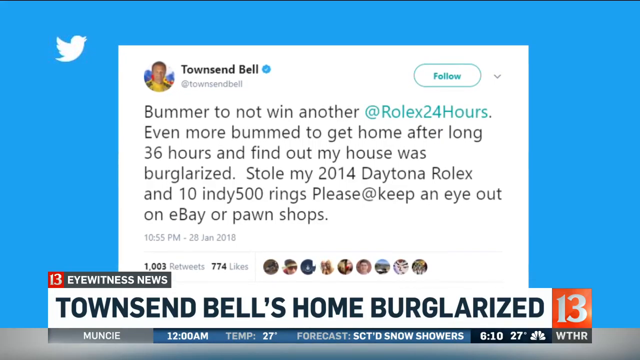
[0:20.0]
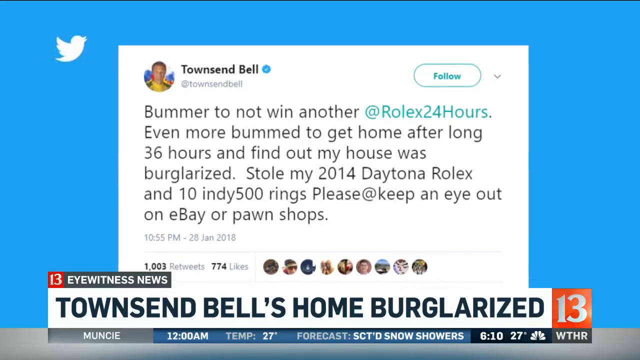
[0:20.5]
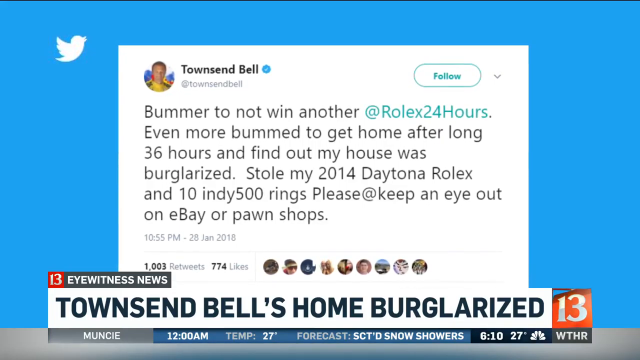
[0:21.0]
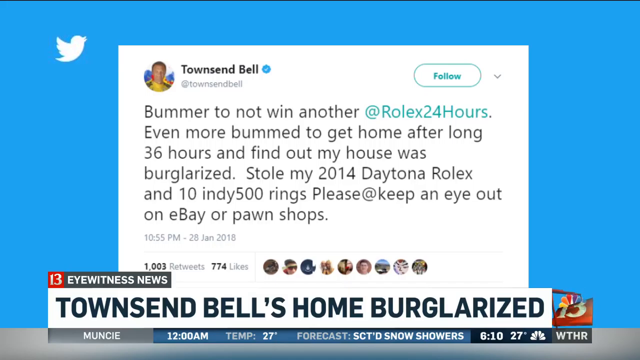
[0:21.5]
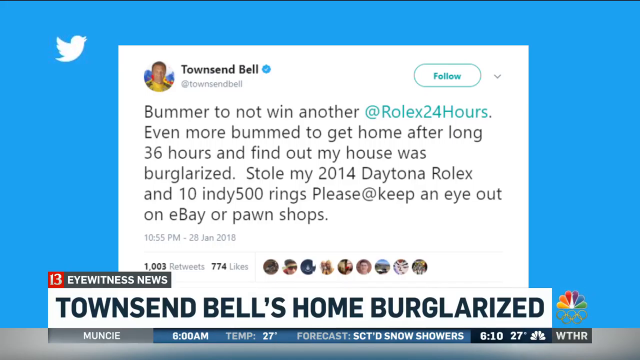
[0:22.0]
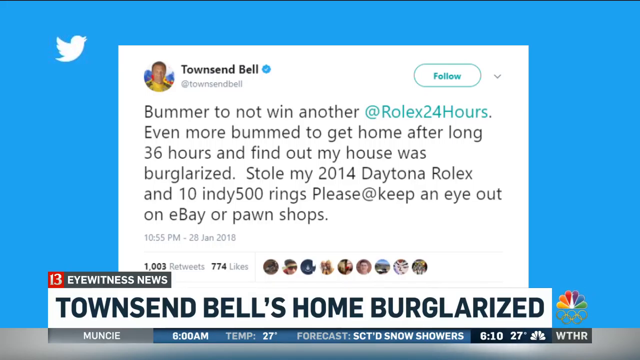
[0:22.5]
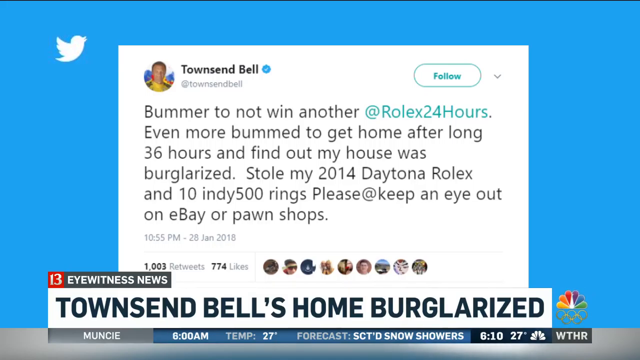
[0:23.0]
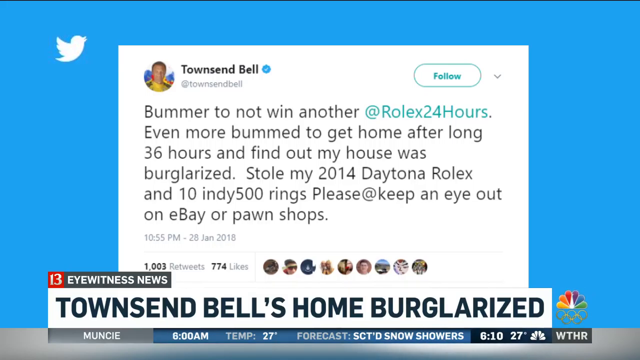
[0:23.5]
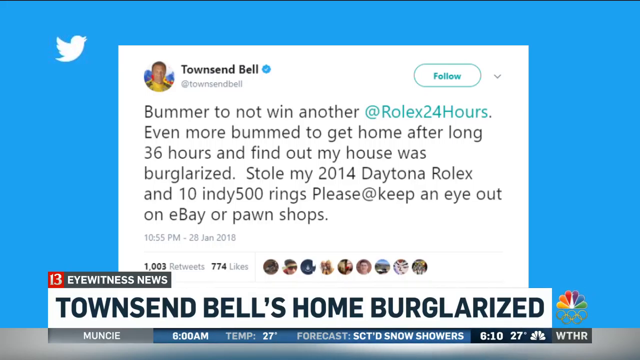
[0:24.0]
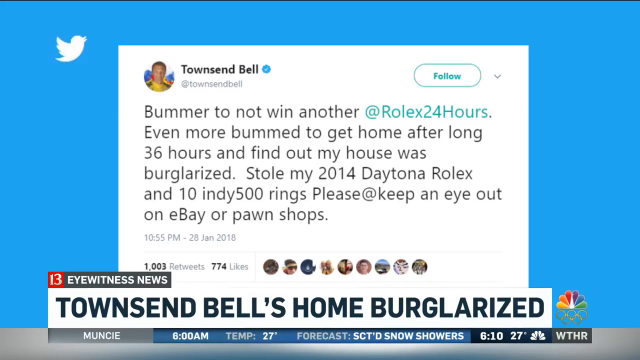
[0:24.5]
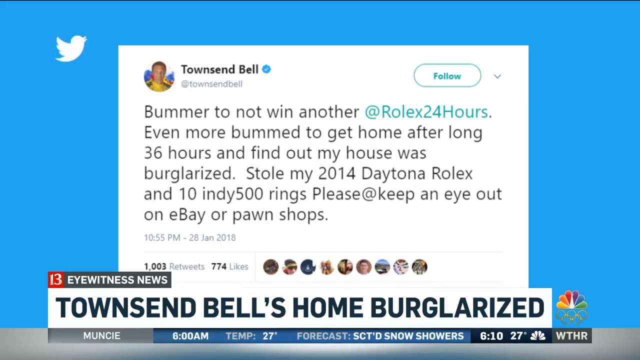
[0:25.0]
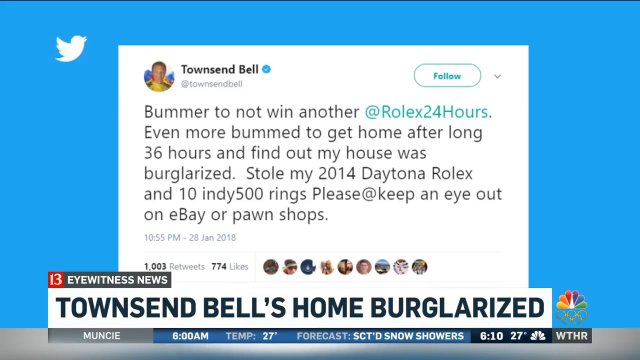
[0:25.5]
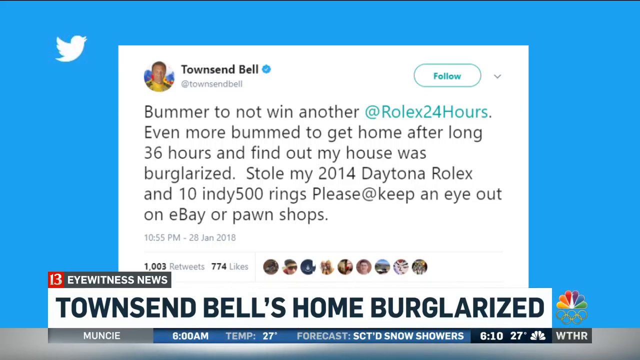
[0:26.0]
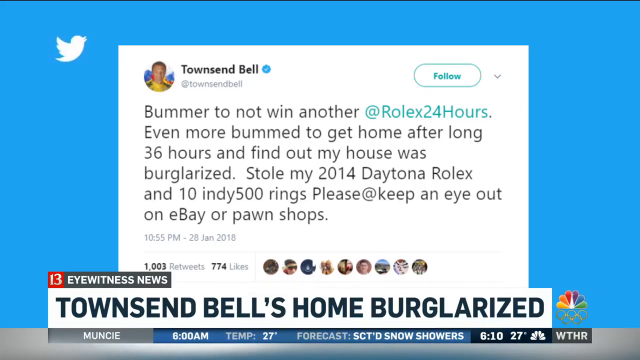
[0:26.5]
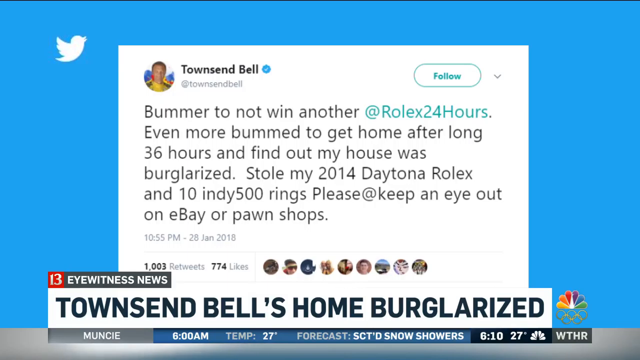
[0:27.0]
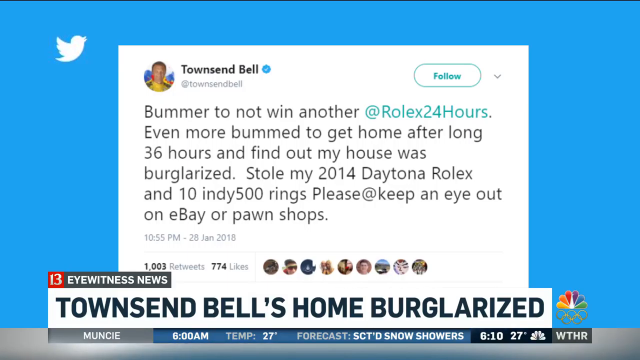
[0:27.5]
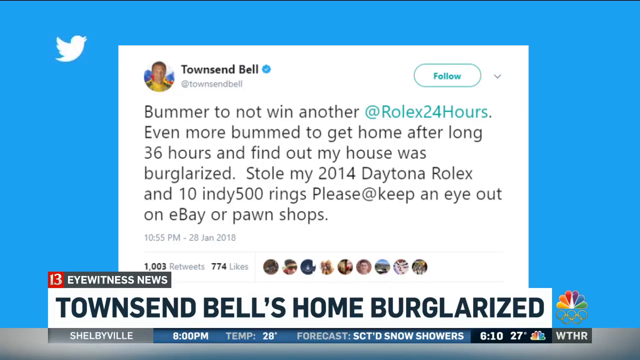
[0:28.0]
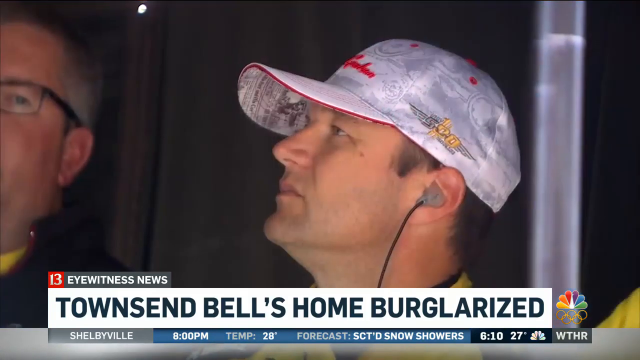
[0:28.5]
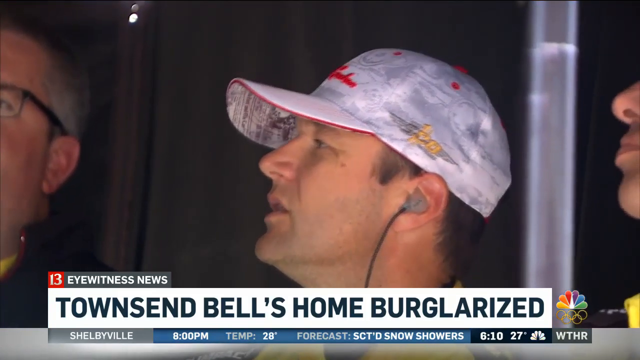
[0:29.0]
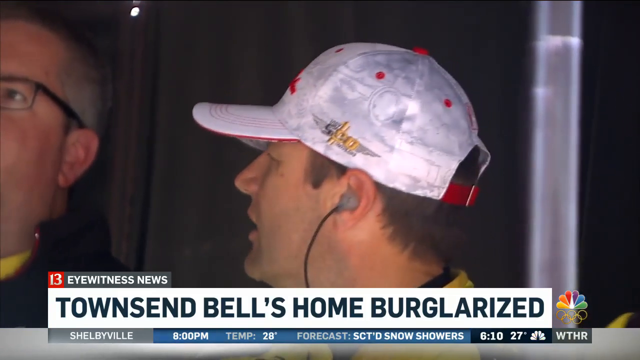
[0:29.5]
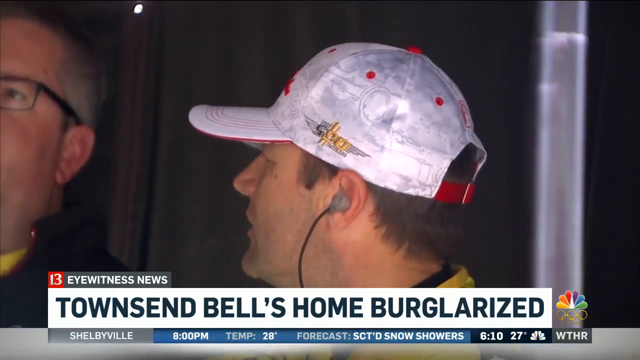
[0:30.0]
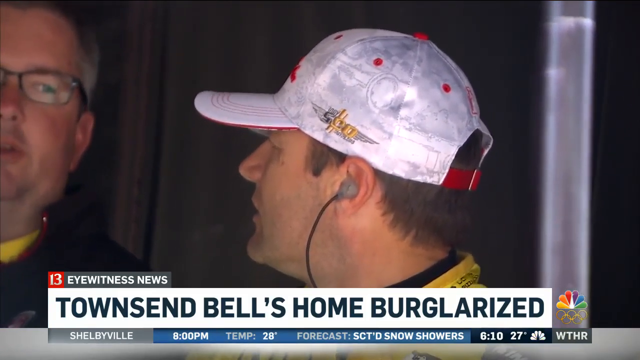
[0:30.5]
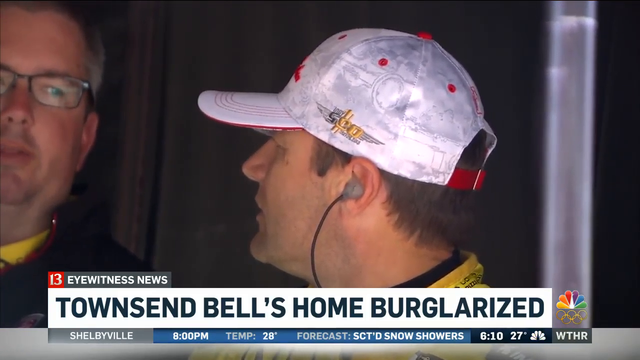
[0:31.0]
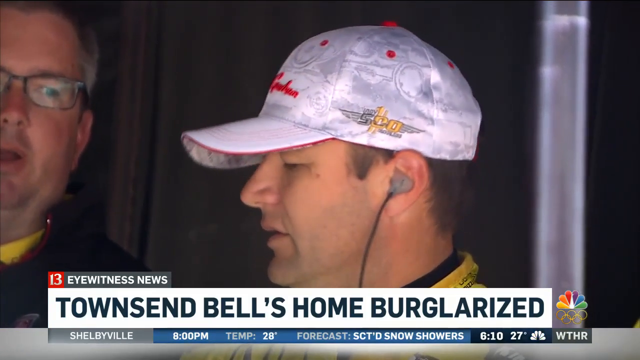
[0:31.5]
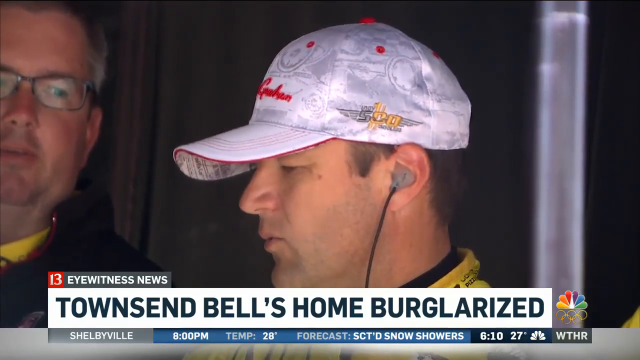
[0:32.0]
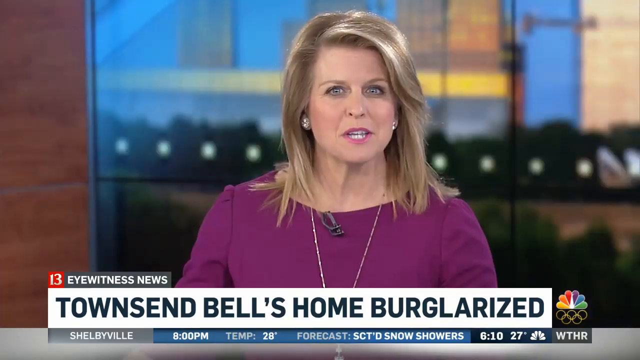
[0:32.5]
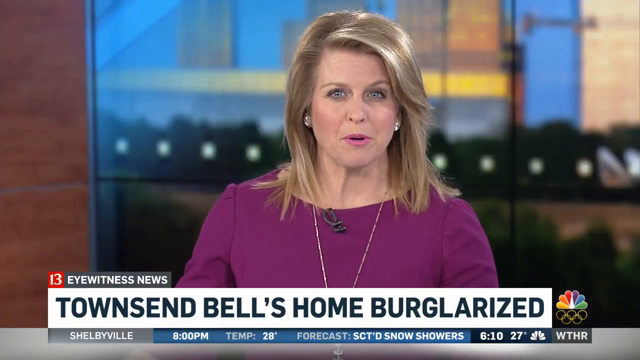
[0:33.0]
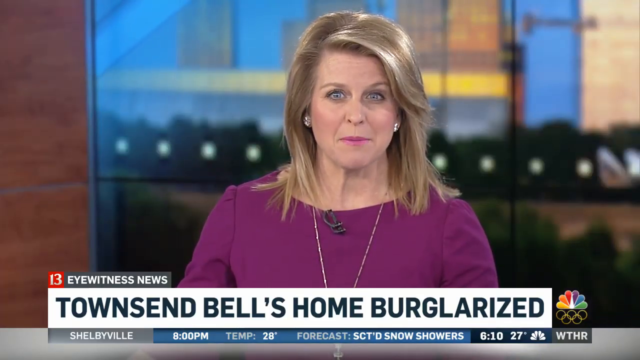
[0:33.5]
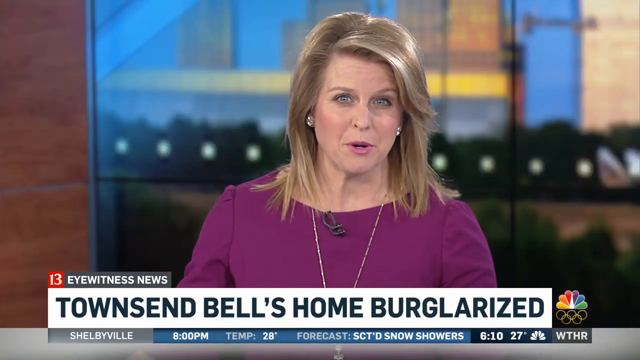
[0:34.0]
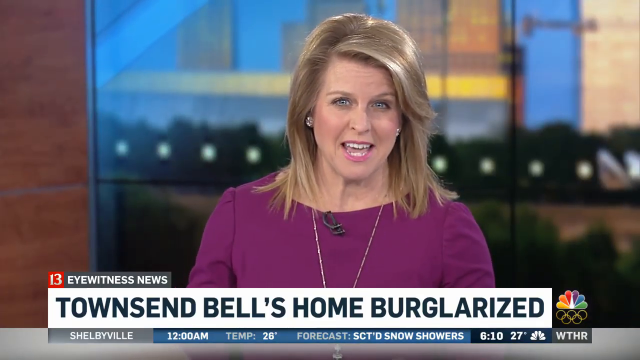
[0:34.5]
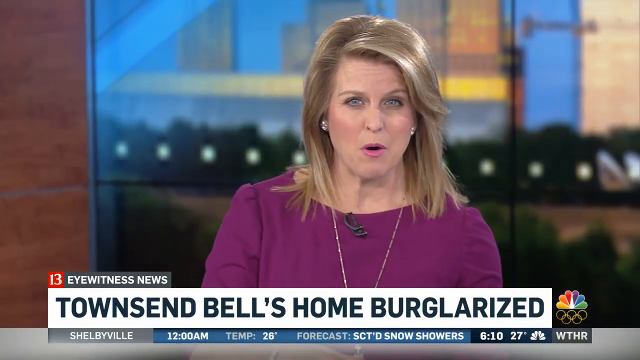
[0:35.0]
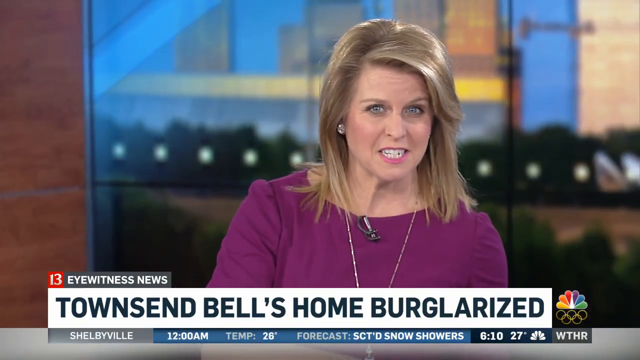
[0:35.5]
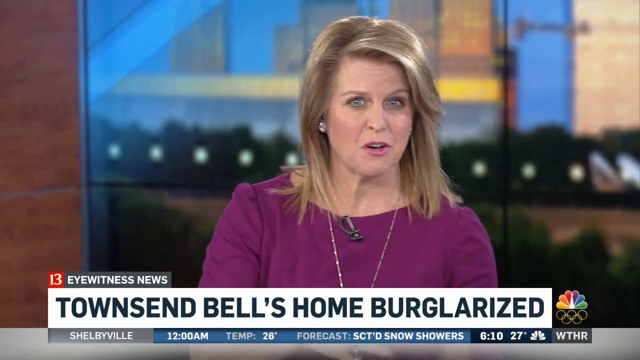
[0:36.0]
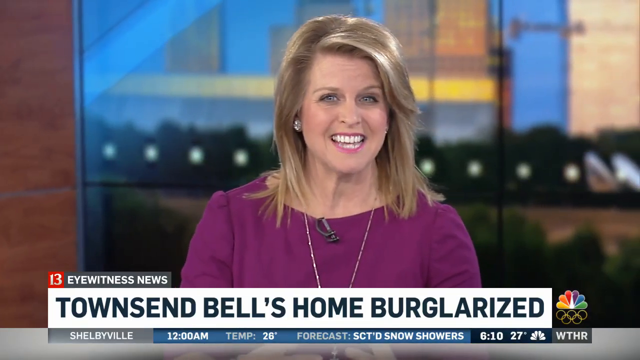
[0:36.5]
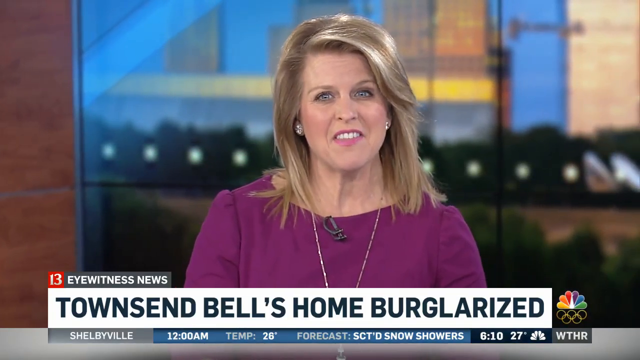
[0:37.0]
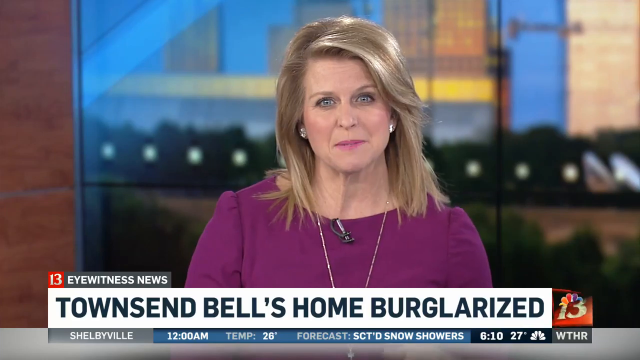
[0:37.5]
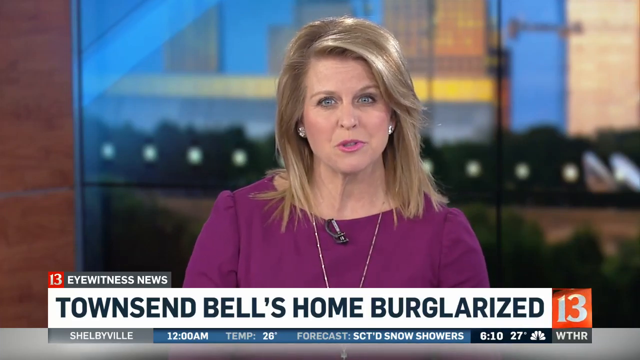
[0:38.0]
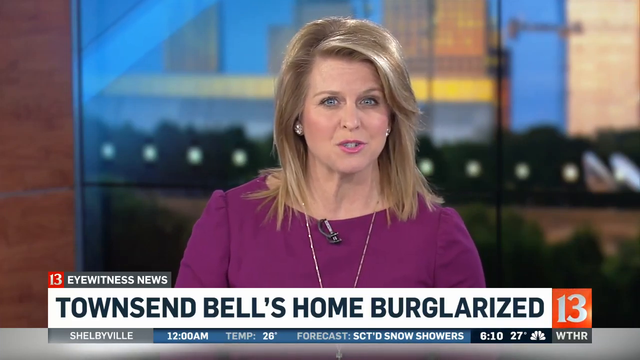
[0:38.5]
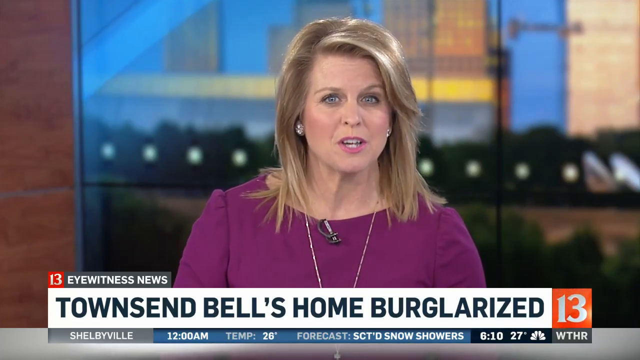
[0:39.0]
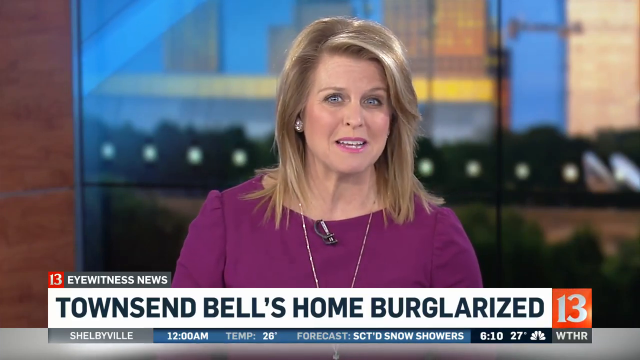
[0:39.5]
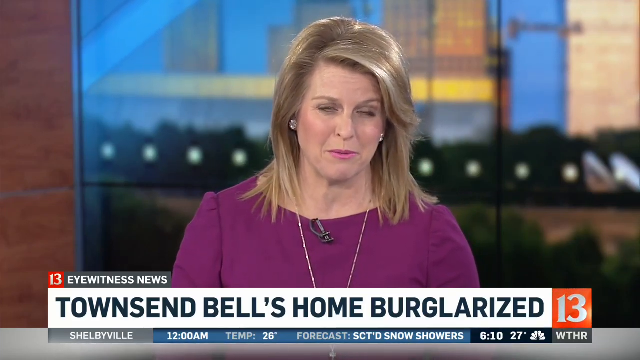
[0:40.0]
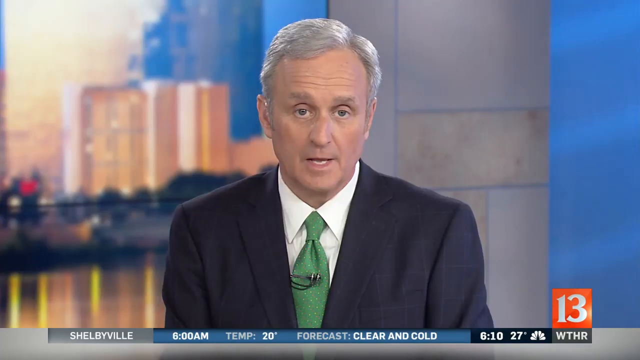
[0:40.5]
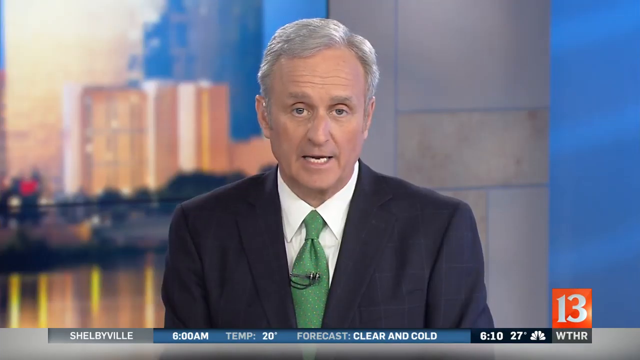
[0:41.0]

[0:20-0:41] The Twitter message from Townsend Bell is still shown: "Bummer to not win another at Rolex 24 hours. Even more bummed to get home after a long 36 hours and find out my house was burglarized. Stole my 2014 Daytona Rolex and 10 Indy 500 rings. Please keep an eye out on eBay or pawn shop." It has 1,003 retweets and 774 likes, with "13 Eyewitness News" branding. The story title at the bottom reads "Townsend Bell's home burglarized." The background is Twitter blue, with a little white Twitter bird in the top left corner. The shot stays on this page for a long time, then cuts to a live feed of a man in a white hat with what looks like two other people on either side of him. The one on the left looks like a male wearing glasses, in something like a black jacket with a yellow shirt. The other kind of looks like a woman, but only the nose, chin and lips are visible. The man in the middle wears a white hat and something like a yellow shirt, and appears to have headphones in; the writing on their shirts is not readable. The video then cuts to the female news anchor in the purple dress, who is talking and wearing a necklace, followed by a quick shot of the male anchor in a blue suit with a green tie and a white shirt talking.